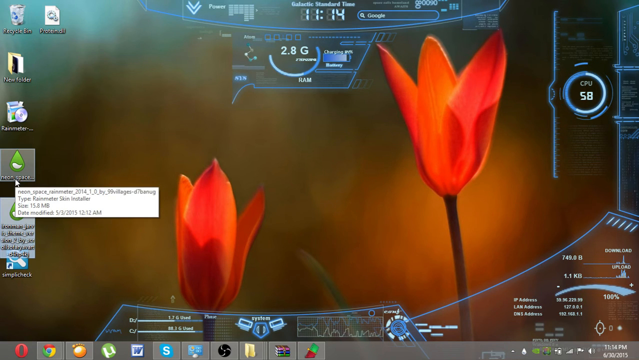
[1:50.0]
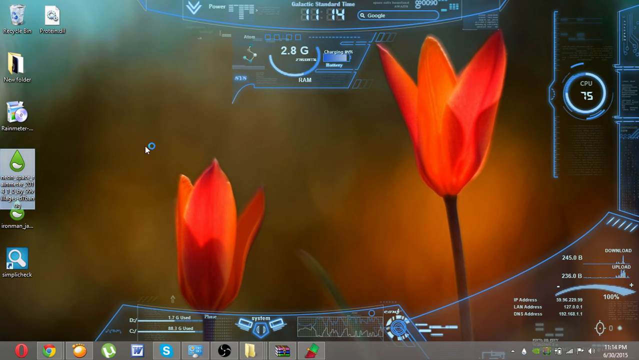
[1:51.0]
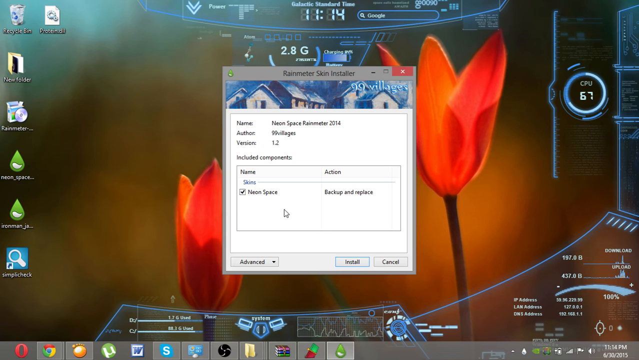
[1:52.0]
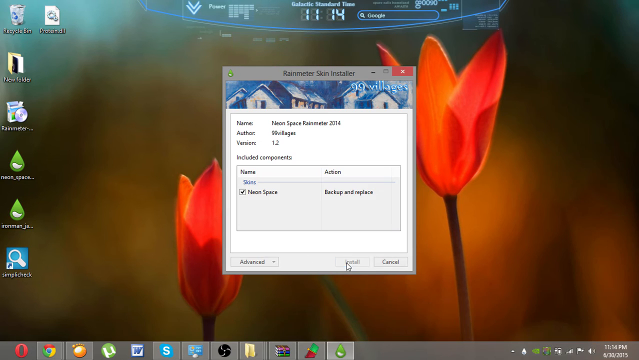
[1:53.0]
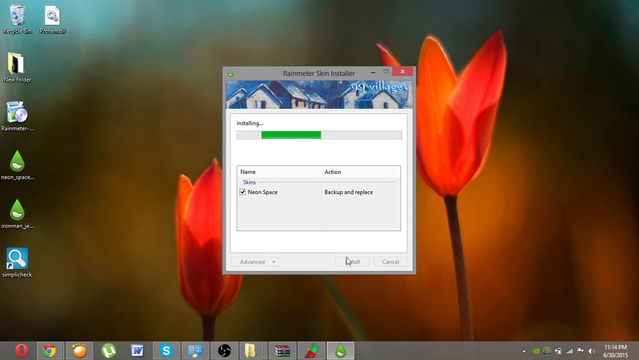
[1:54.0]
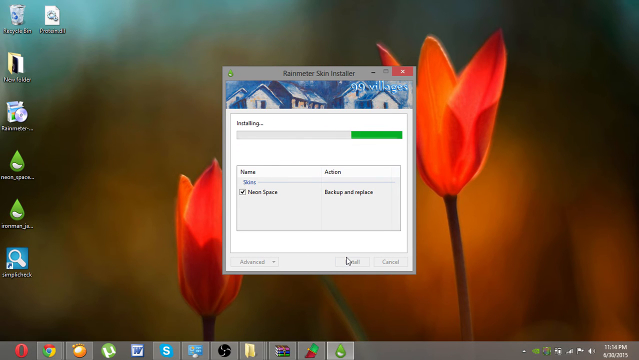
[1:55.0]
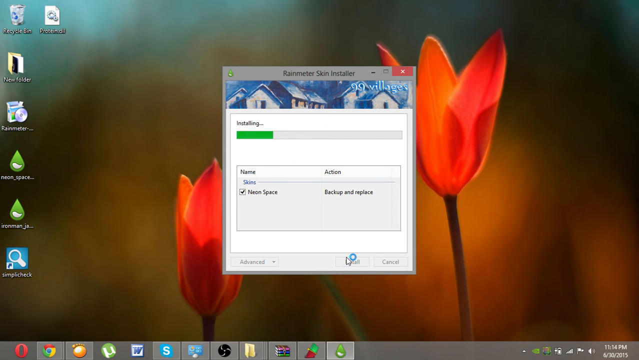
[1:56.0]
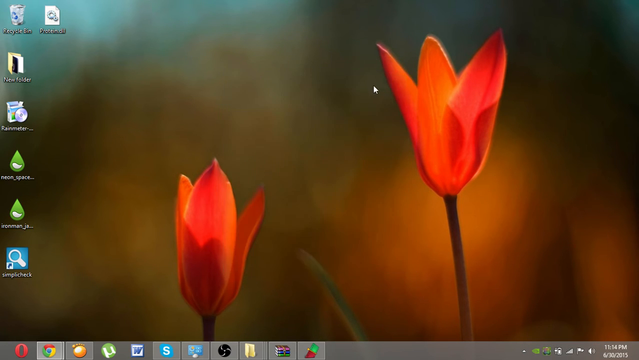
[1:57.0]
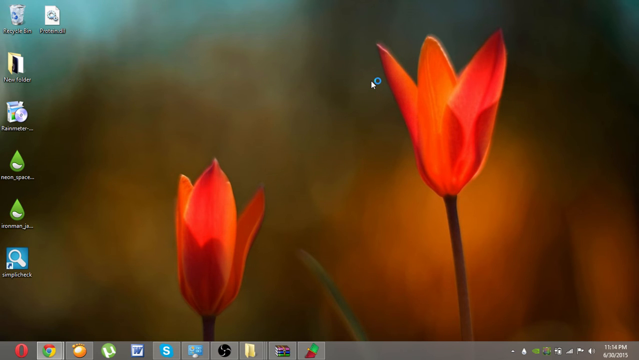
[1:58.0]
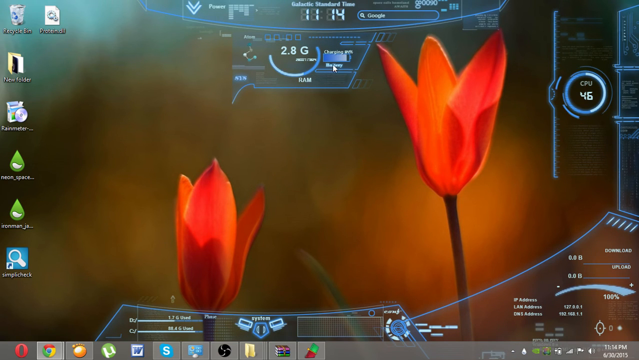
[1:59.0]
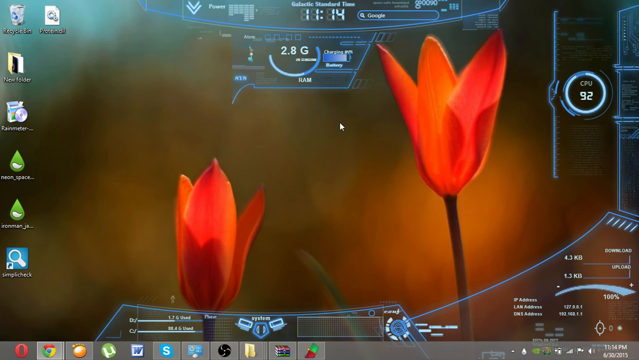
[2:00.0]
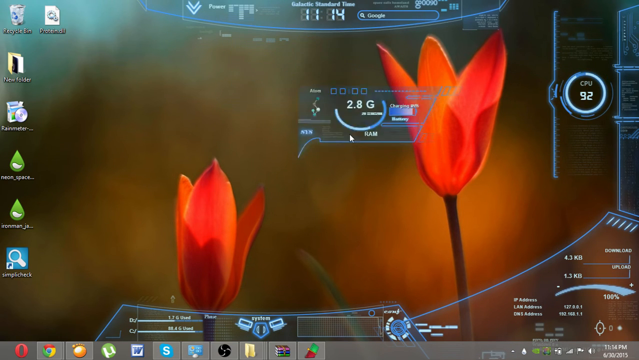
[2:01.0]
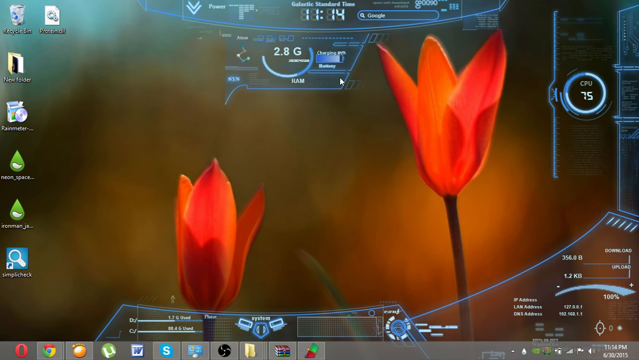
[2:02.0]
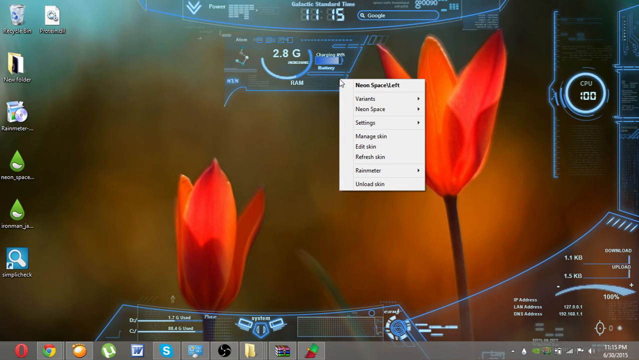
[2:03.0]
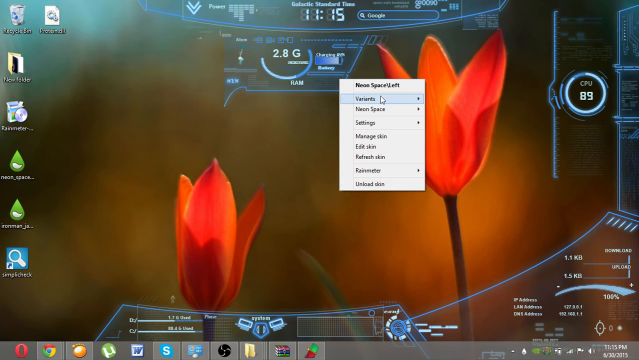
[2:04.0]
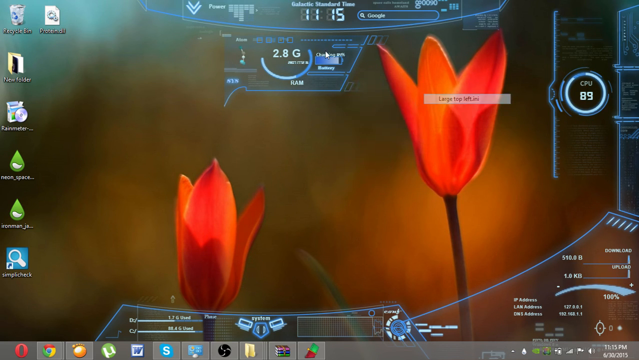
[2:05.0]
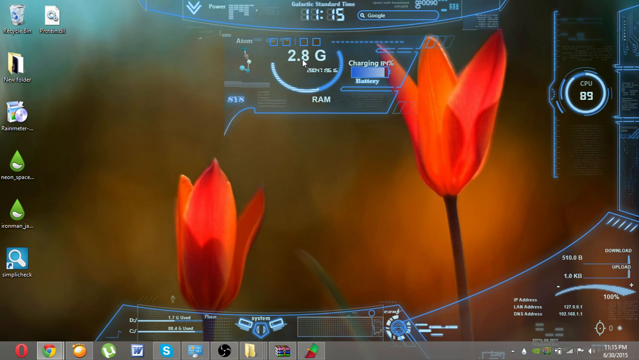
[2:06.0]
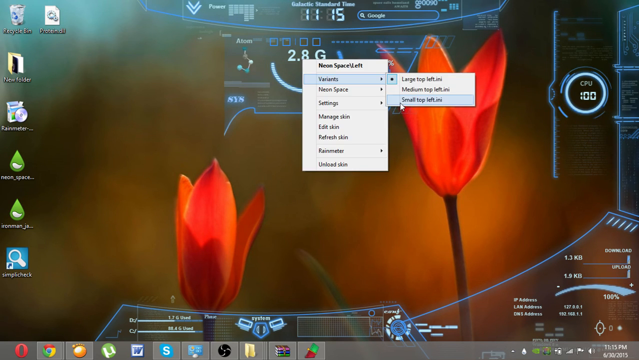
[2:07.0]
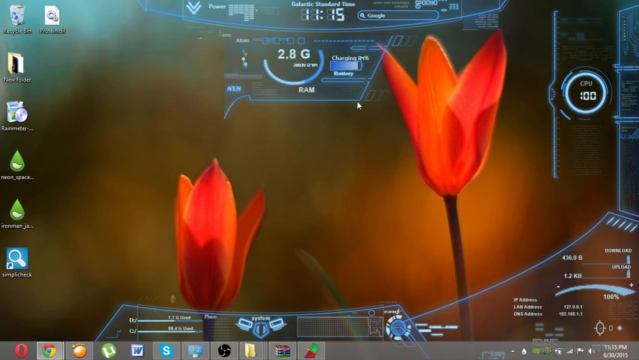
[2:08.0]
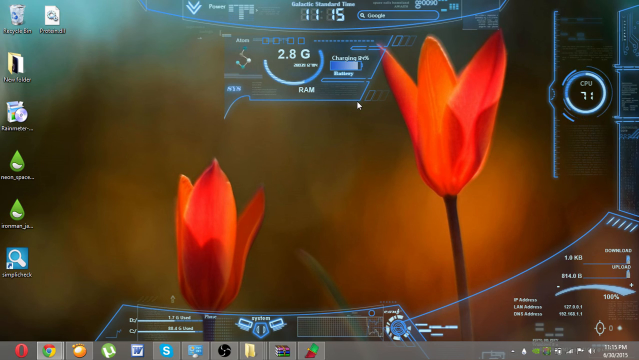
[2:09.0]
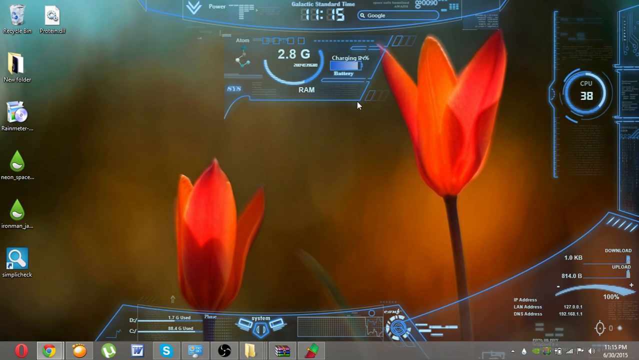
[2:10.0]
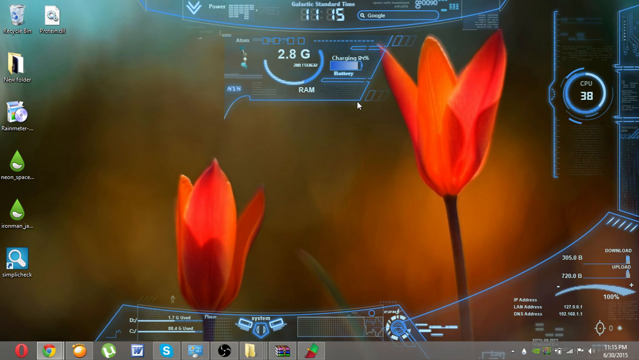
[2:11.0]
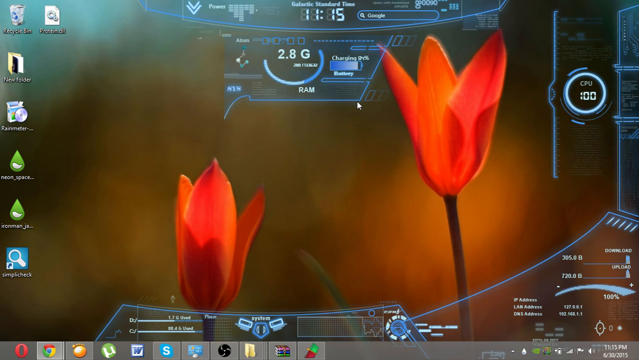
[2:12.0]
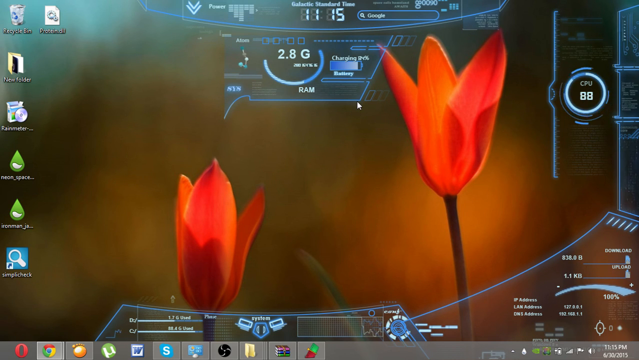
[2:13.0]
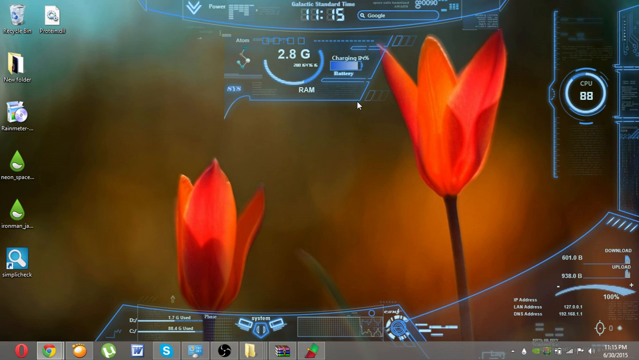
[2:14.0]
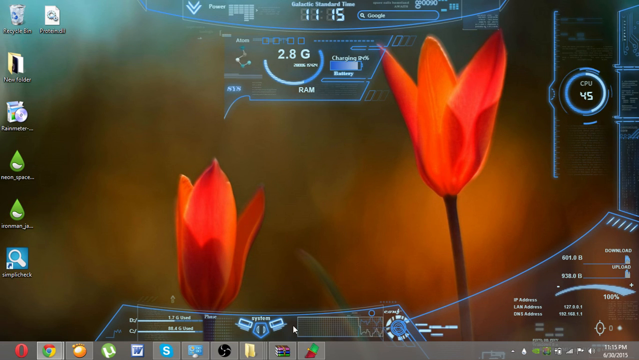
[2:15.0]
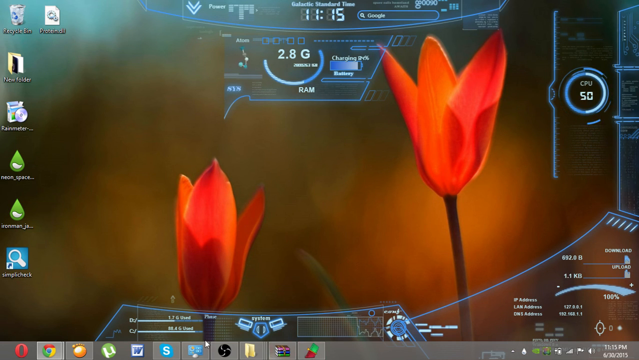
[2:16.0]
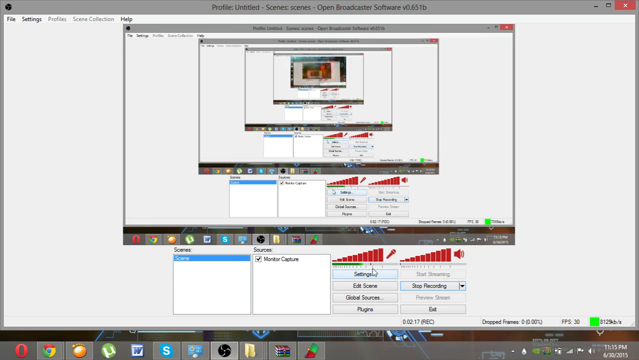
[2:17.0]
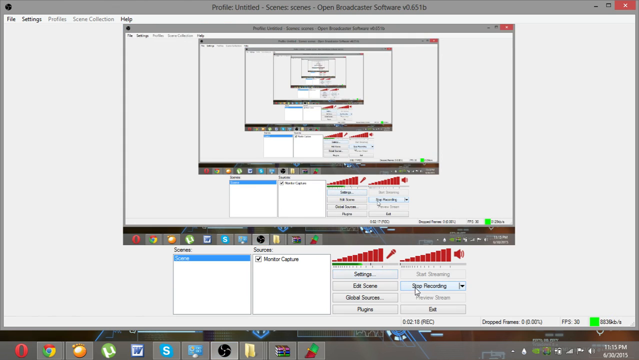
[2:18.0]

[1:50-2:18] A desktop screen is shown with a wallpaper of two tulips with orange flowers. The mouse is hovered over a green raindrop icon on the desktop that appears to be an executable for the Rainmeter skin installer. The mouse double-clicks the executable, and a dialog box appears with the title "RainMeter Skin Installer", showing the name of the skin as "NeonSpace RainMeter 2004 version 1.2". The mouse hovers over the install button and clicks it, and a grey progress bar fills with a green bar moving from left to right as the items are installed on the system. The dialog box disappears and the mouse moves up and grabs hold of a component on the desktop, which appears to be a CPU usage meter showing a CPU speed of 2.8 GHz at present. The mouse moves this widget around the desktop, and it appears that the mouse right-clicks on it and then scales the widget up, increasing its size so it is more visible on the desktop.